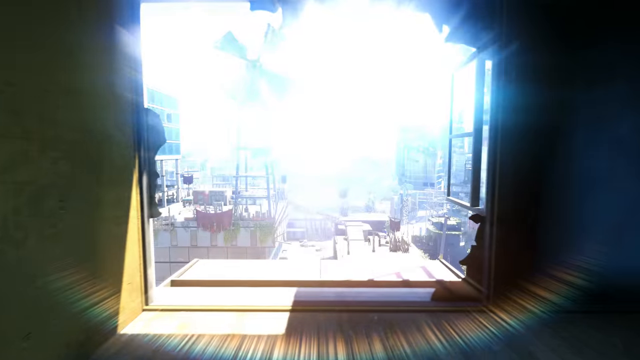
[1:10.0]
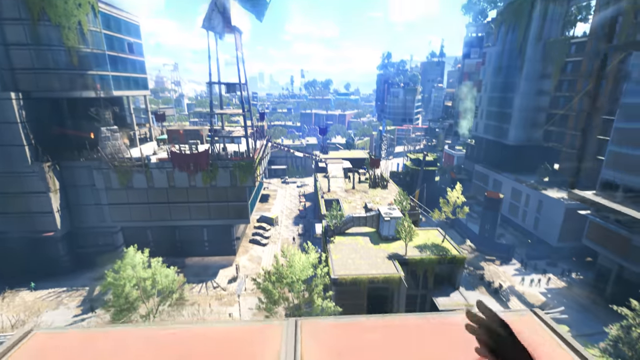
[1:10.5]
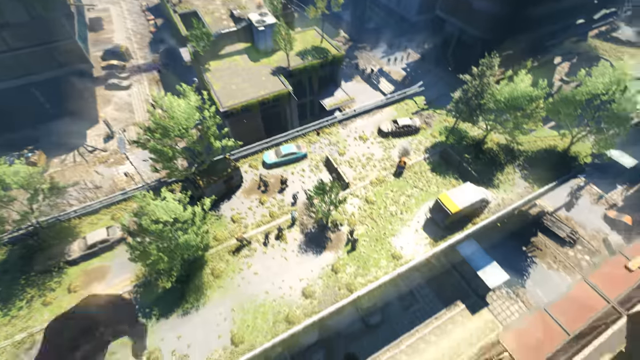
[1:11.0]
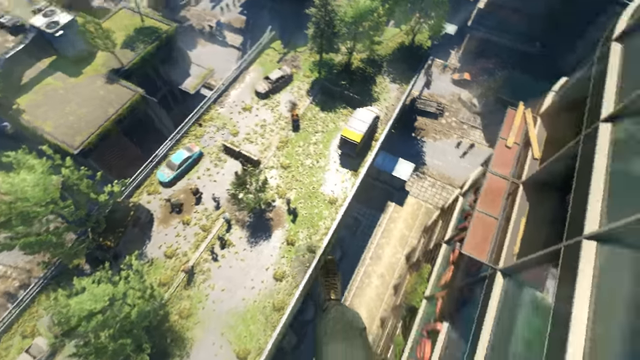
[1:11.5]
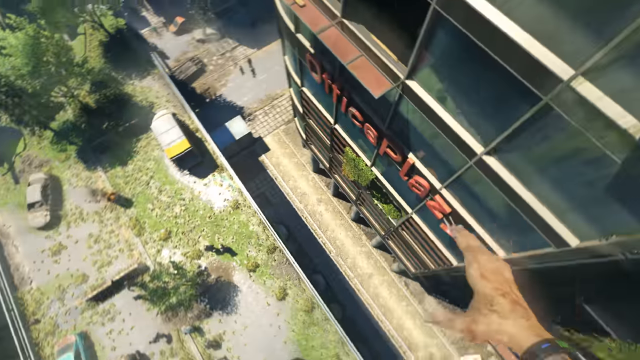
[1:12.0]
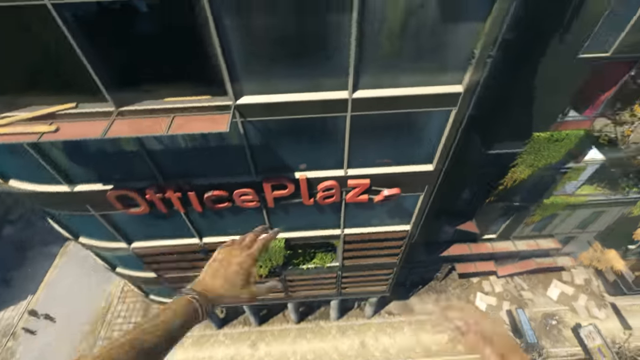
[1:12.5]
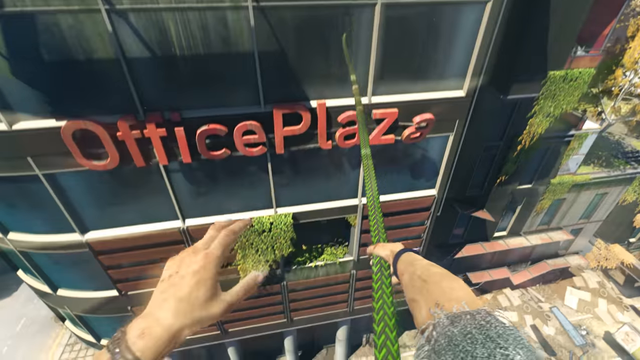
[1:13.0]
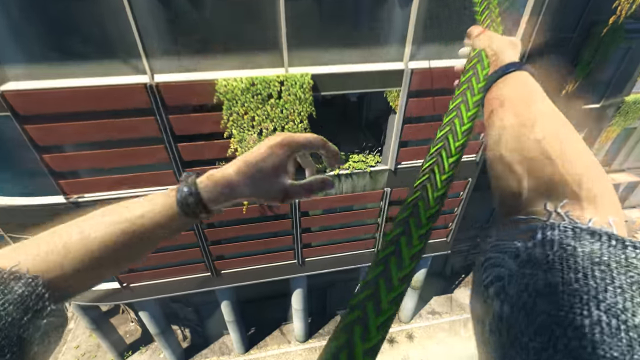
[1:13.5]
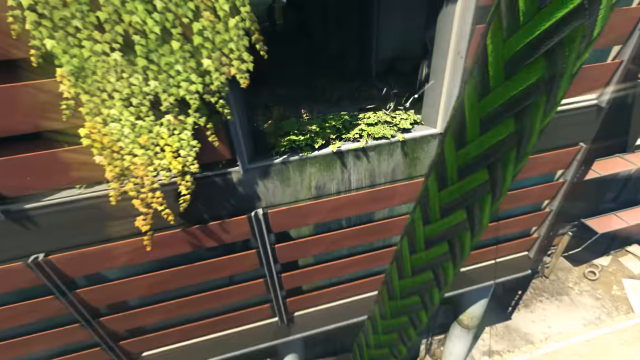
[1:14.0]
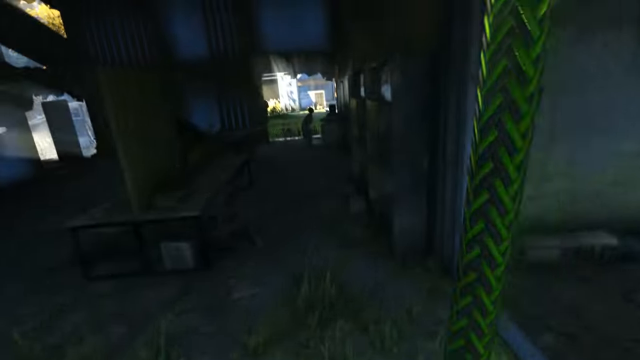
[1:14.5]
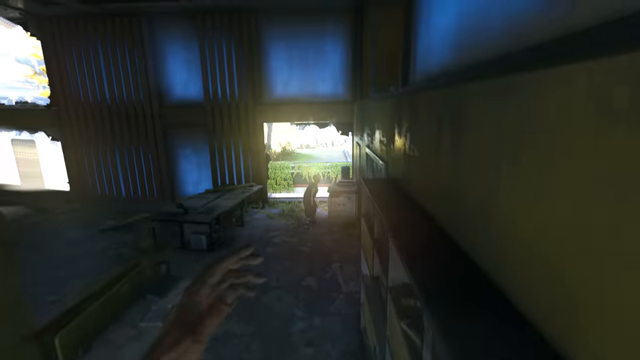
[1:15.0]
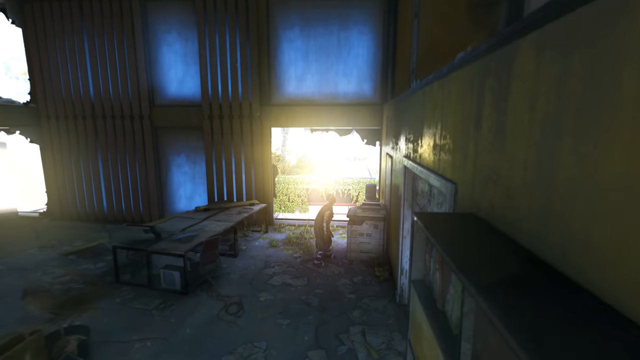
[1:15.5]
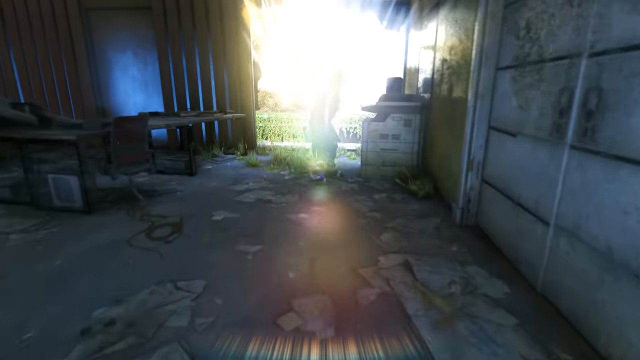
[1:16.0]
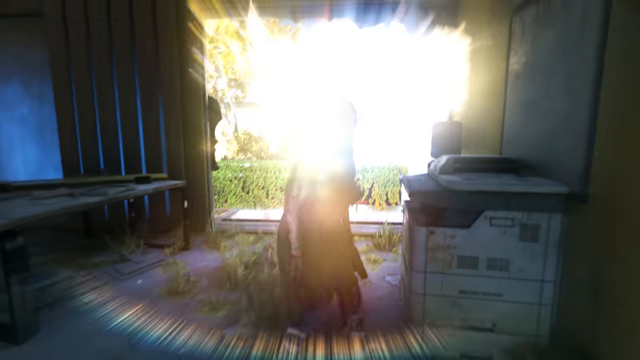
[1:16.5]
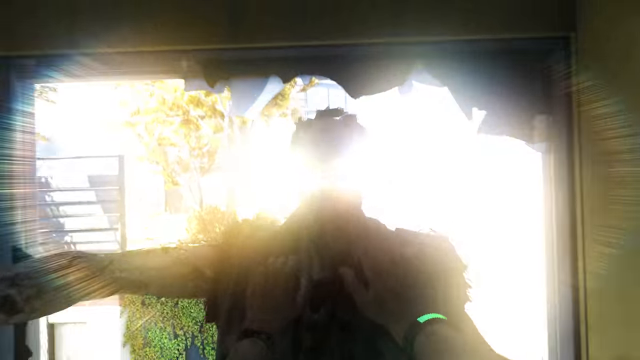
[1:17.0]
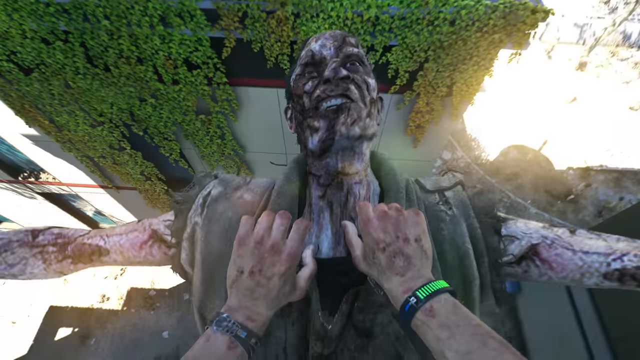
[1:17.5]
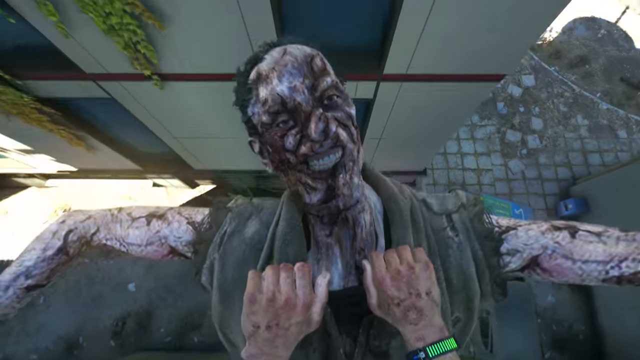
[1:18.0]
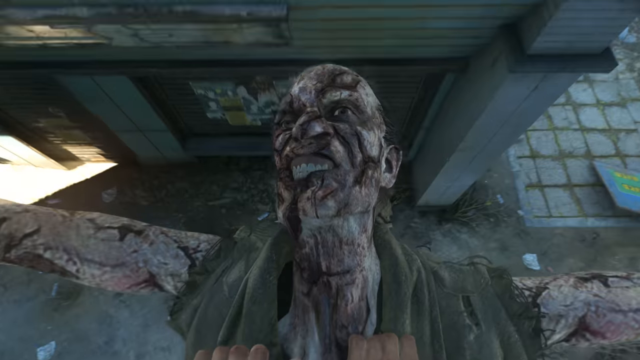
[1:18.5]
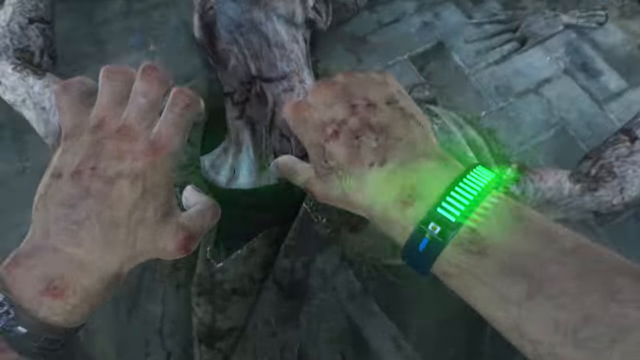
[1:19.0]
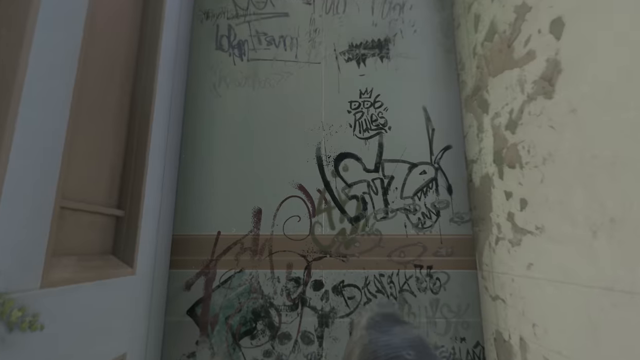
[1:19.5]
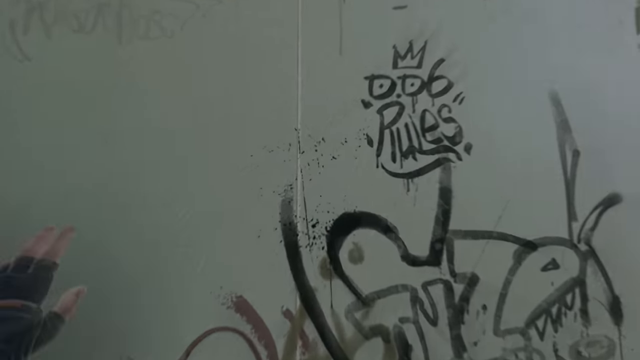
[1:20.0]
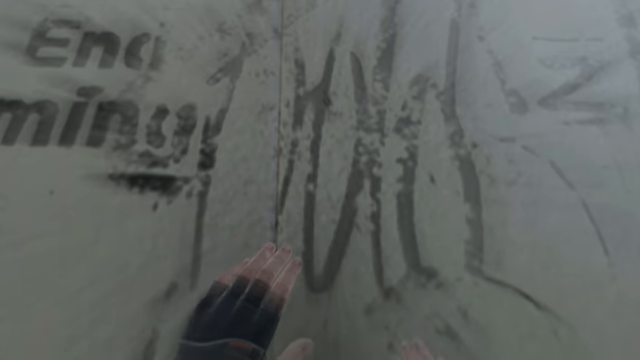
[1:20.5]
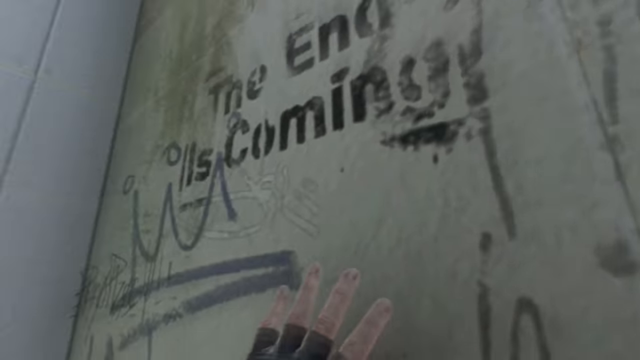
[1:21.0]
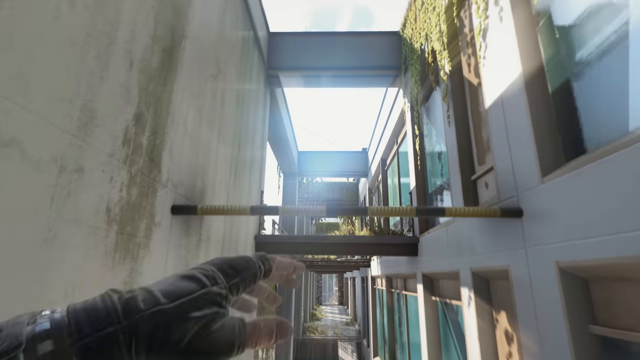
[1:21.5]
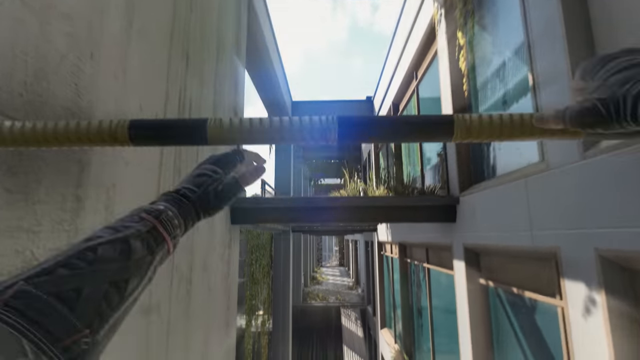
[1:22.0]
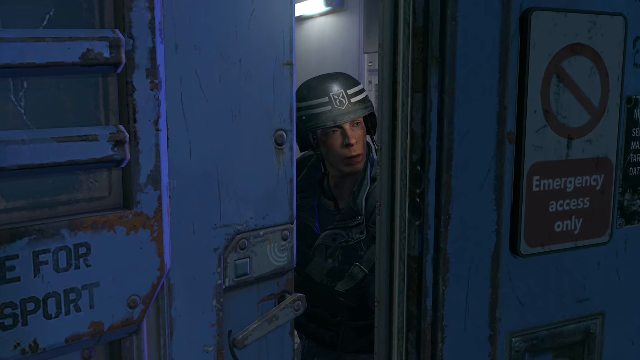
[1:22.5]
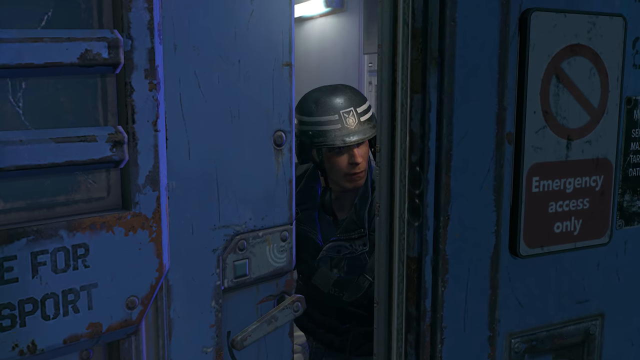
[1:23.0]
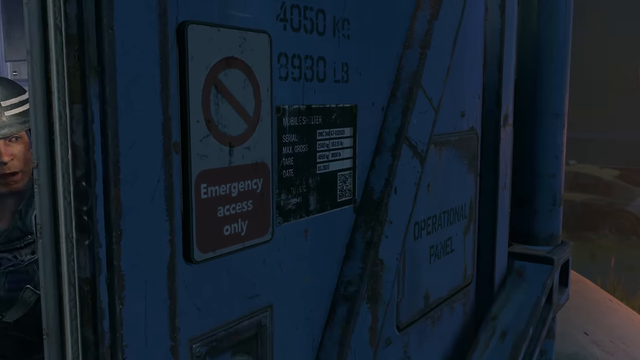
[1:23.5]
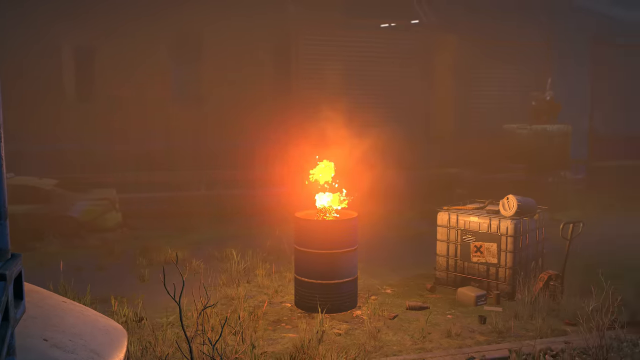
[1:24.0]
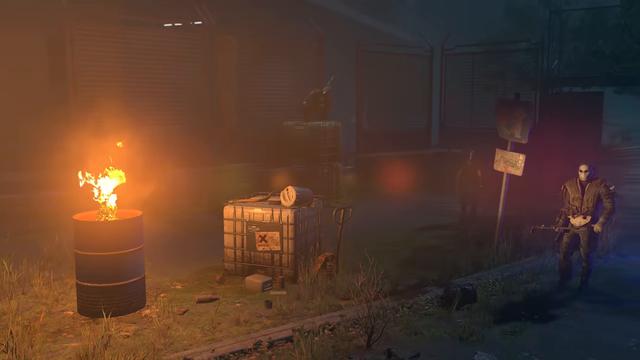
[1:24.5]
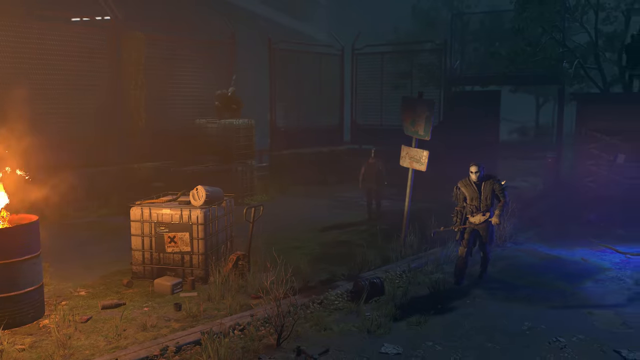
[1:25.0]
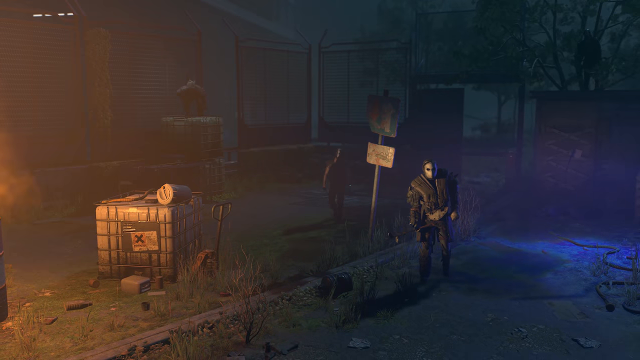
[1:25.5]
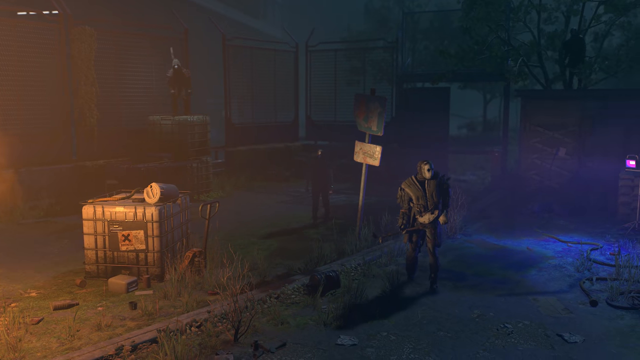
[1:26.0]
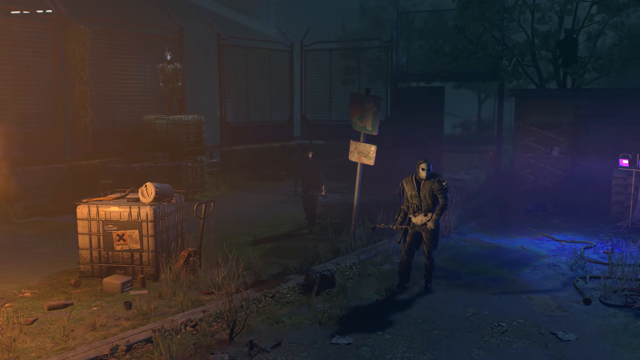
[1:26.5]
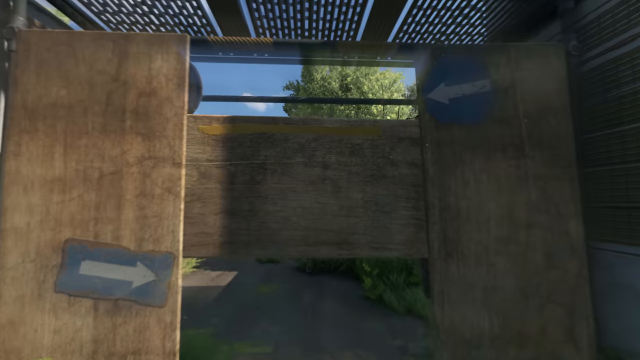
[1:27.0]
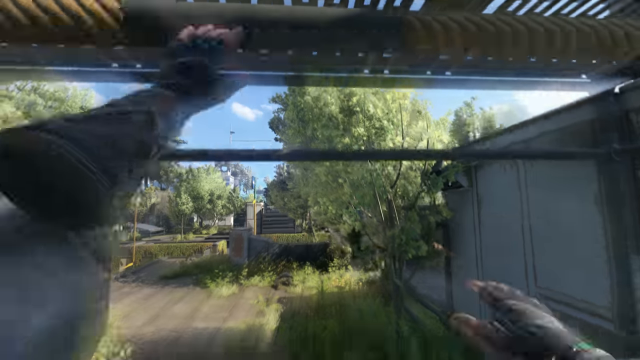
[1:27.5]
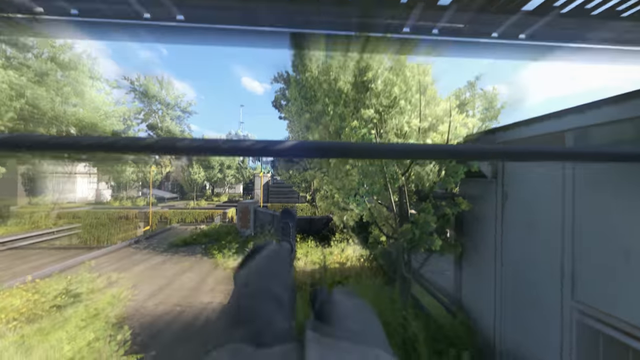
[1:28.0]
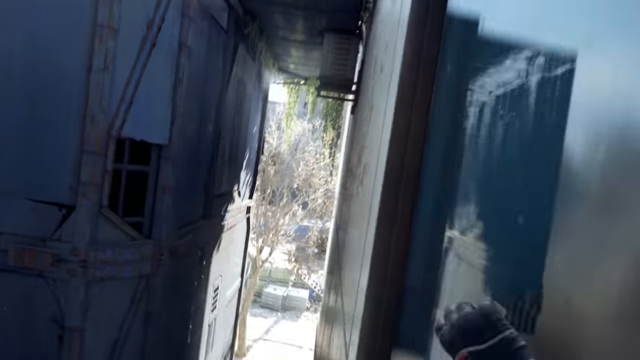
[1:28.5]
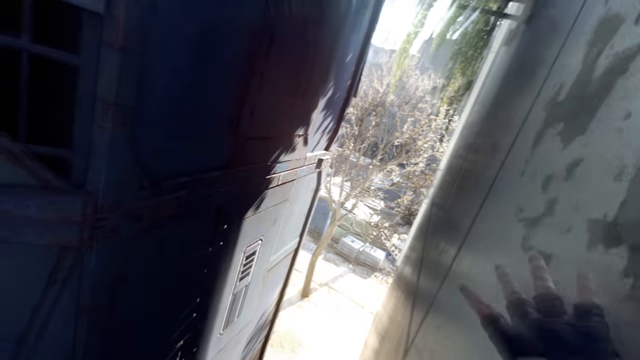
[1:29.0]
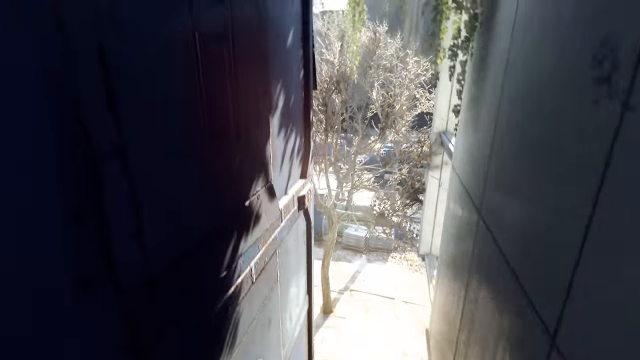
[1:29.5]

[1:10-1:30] The scene is very bright as a person goes outside, jumping out of a window, legs swinging. The person swings onto a green rope and into a building level underneath, pushes a male zombie out the window of what appears to be an old office, and then lands on the ground on top of the zombie, which kind of catches the person's fall. Graffiti is then seen on a wall, and the person's hands are up as they are on the swing. Another person with a helmet appears, then another person with a white mask, then another person jumping all around, though possibly just running.